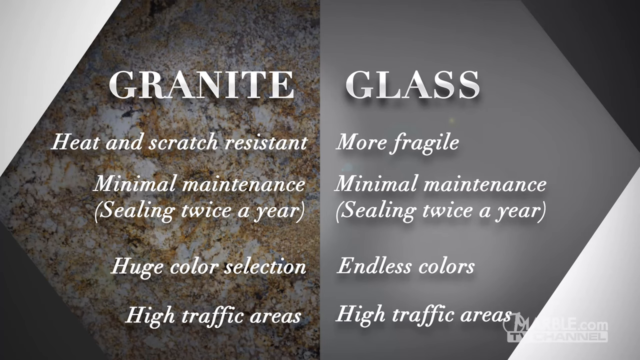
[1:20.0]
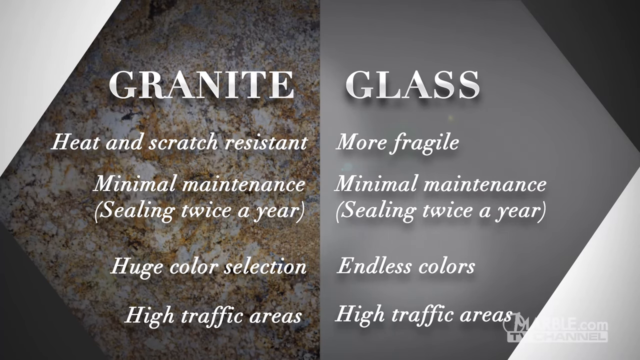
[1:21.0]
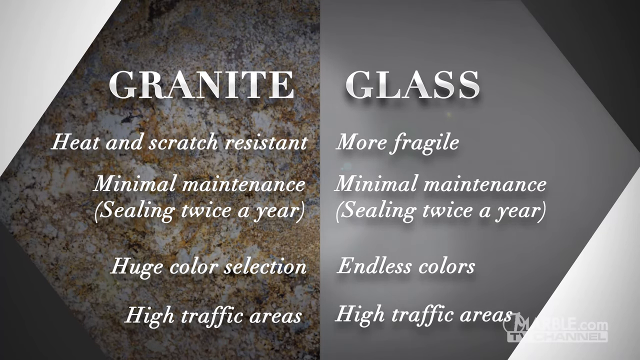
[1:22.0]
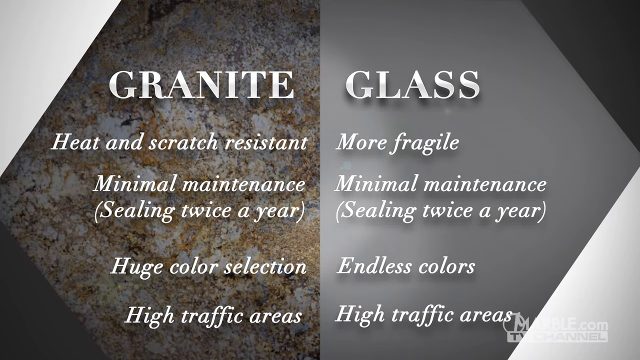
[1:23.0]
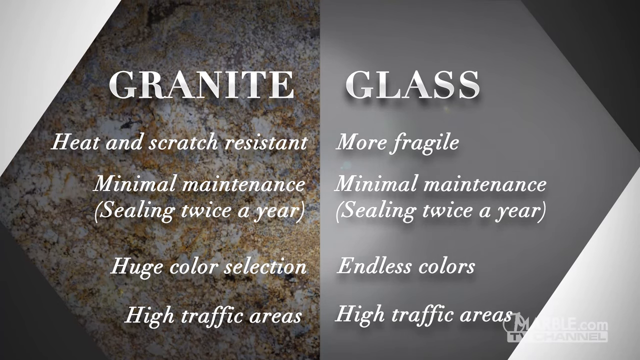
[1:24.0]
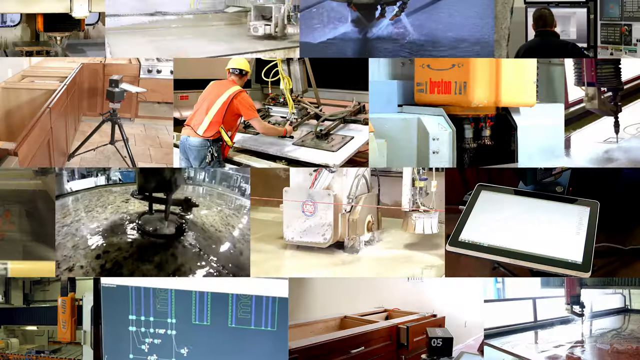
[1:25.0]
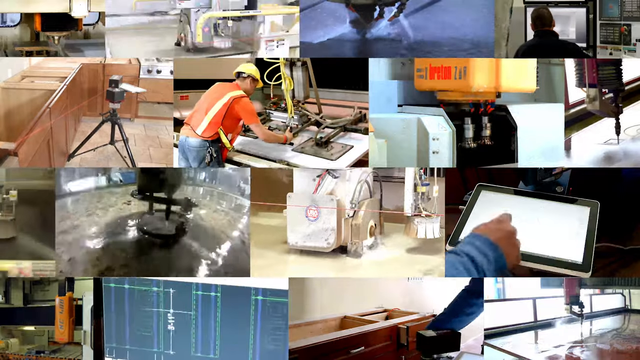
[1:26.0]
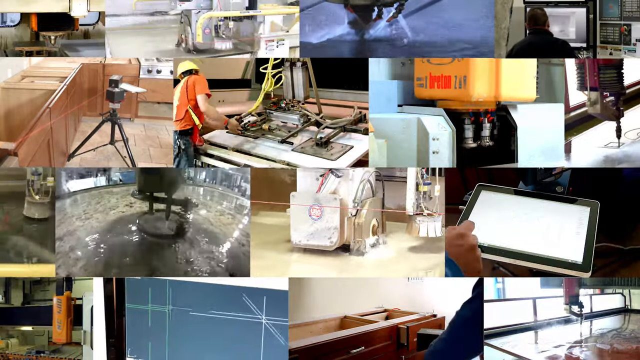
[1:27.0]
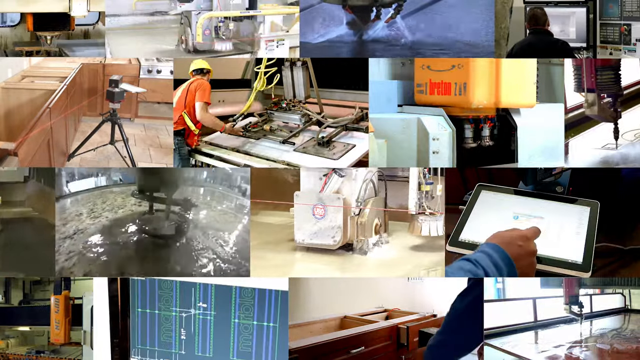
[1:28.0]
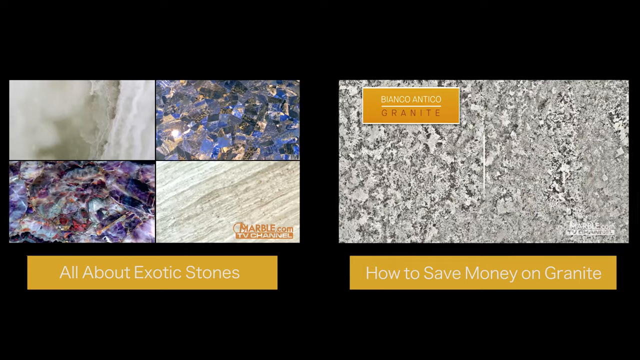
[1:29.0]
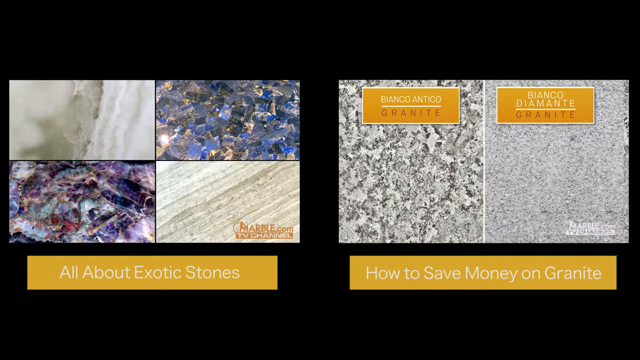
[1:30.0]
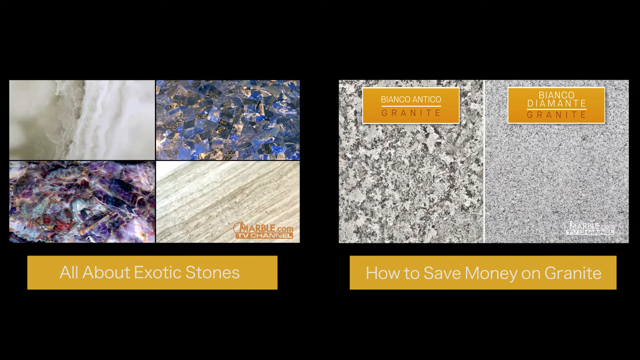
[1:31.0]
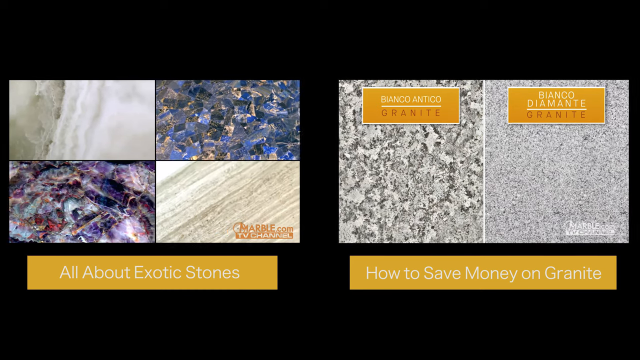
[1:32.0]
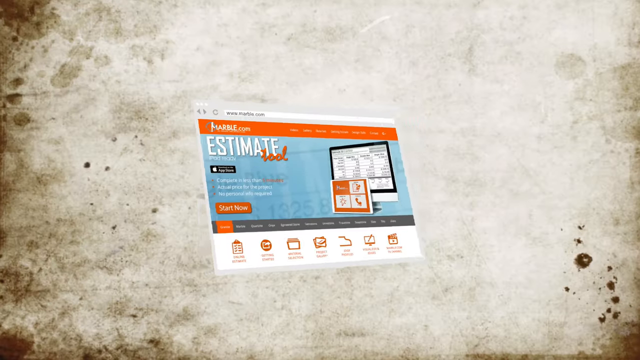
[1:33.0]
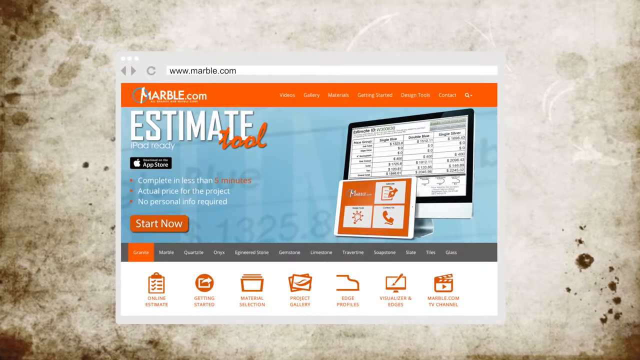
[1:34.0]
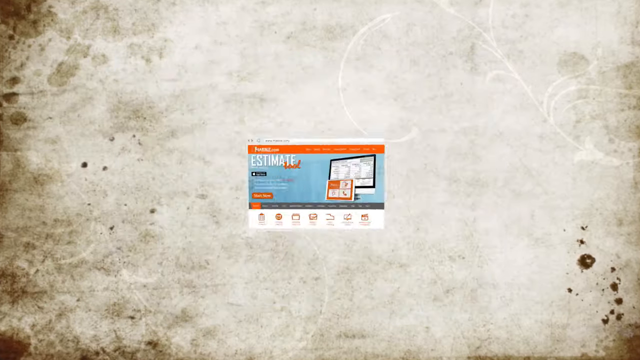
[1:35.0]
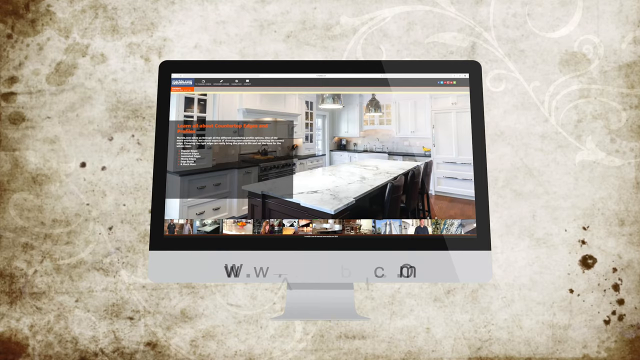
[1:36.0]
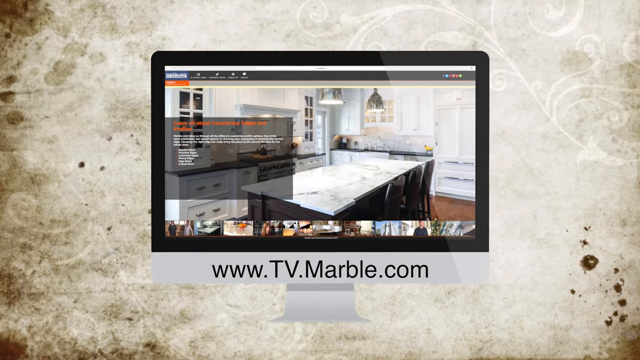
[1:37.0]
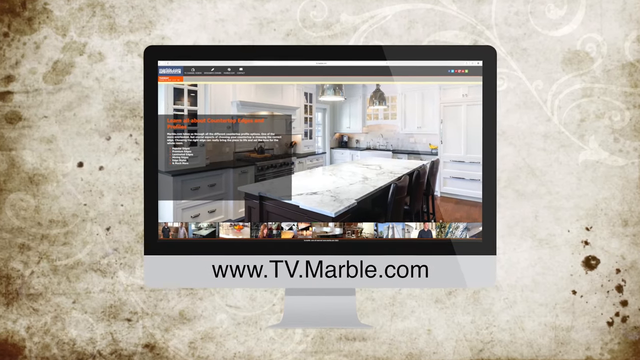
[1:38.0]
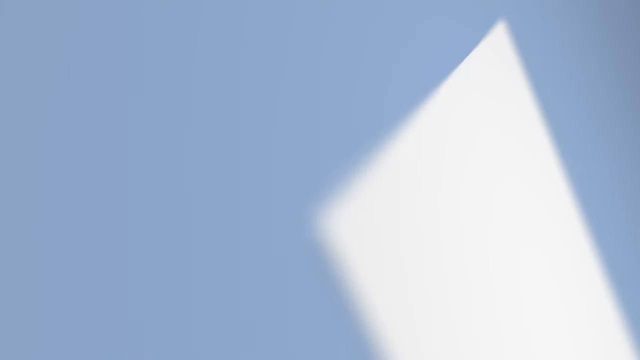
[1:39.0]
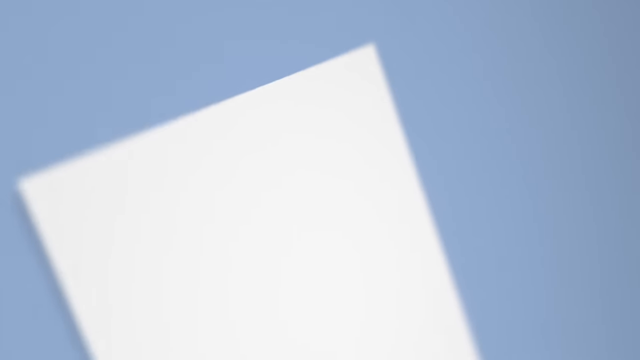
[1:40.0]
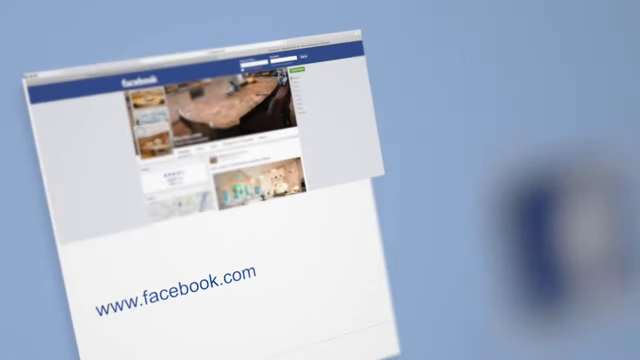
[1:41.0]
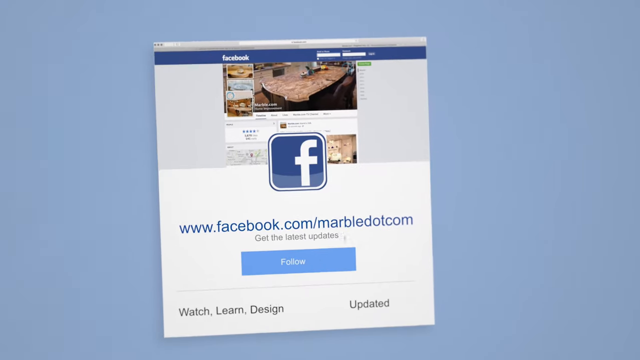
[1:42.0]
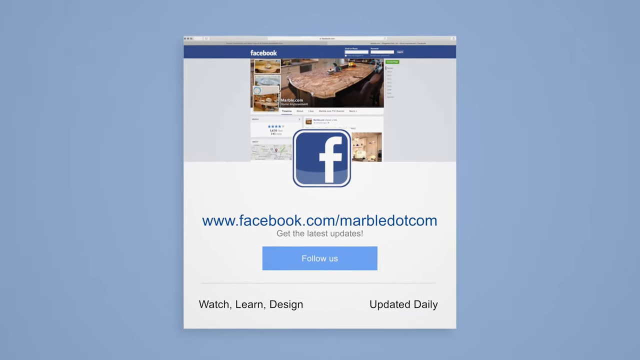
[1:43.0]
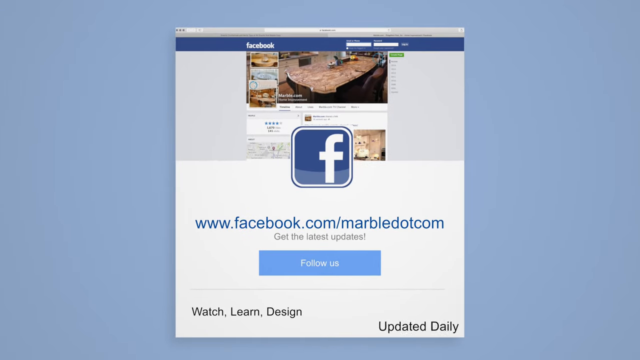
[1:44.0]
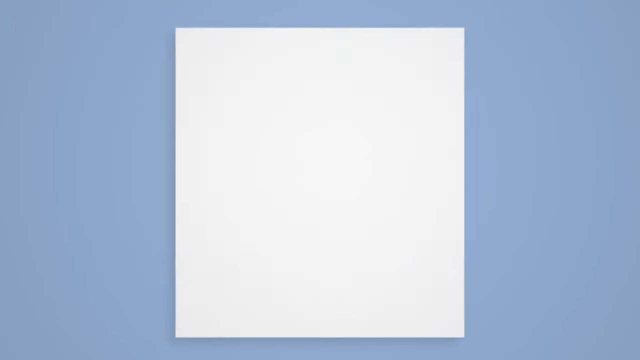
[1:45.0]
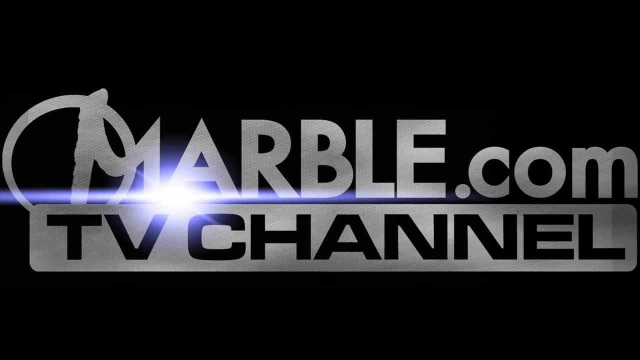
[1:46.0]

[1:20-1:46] The video compares granite and glass: granite is resistant to heat, fire and scratches and does not scratch easily, while glass is more fragile and easily cracks and breaks. Granite needs minimal maintenance, sealed twice a year if necessary, and glass is also minimal maintenance, also needing sealing at least twice a year if necessary. Granite comes in a large selection of colors and designs, and glass also has an endless collection of colors. Granite is good for high-traffic areas, and both materials are used in environments with many people. The video ends with an advertisement for the Marble store, showing an ad and the Facebook of the company Marble.com.